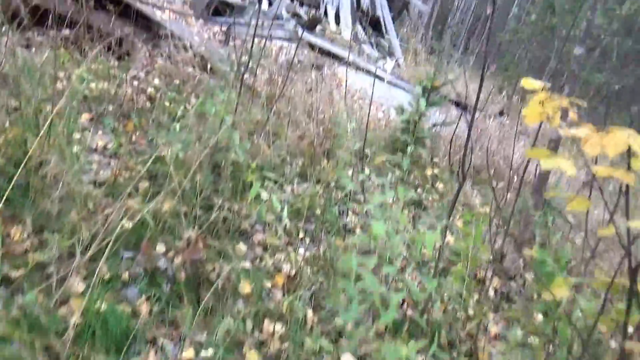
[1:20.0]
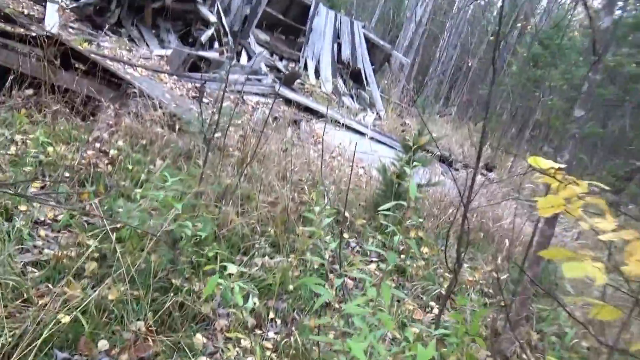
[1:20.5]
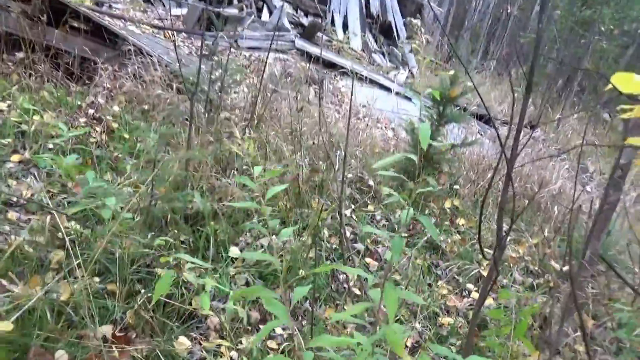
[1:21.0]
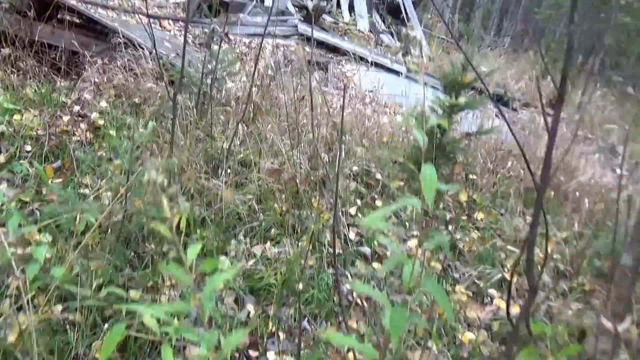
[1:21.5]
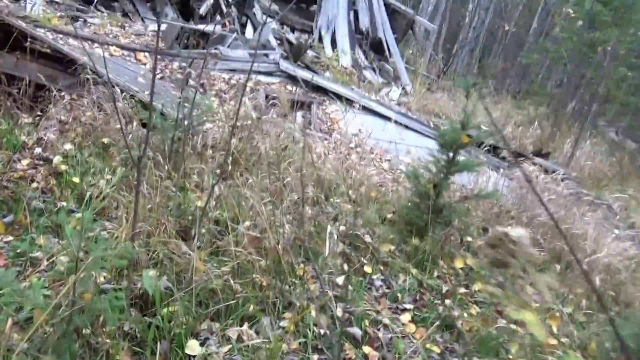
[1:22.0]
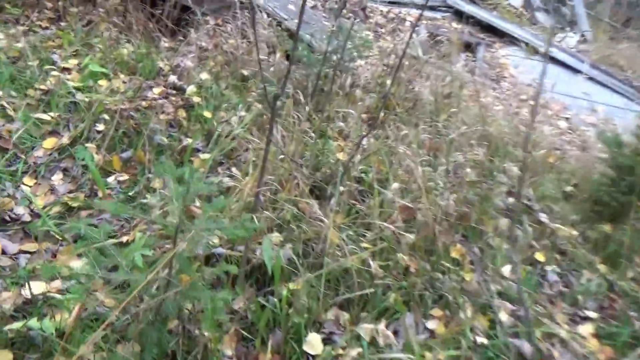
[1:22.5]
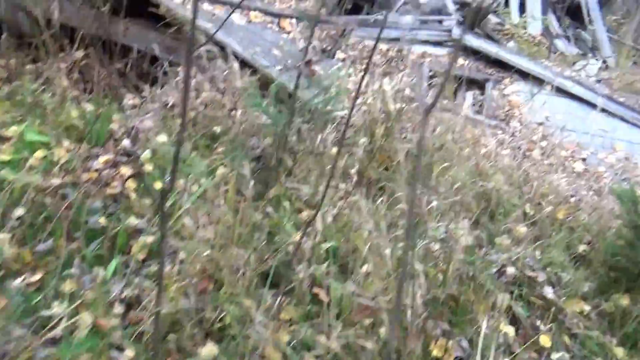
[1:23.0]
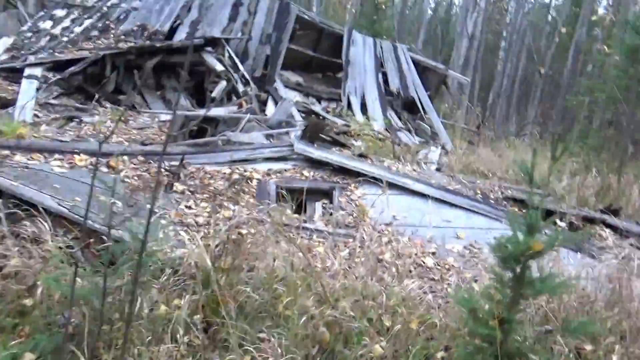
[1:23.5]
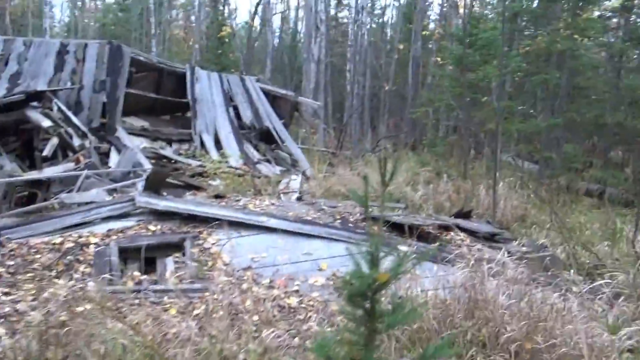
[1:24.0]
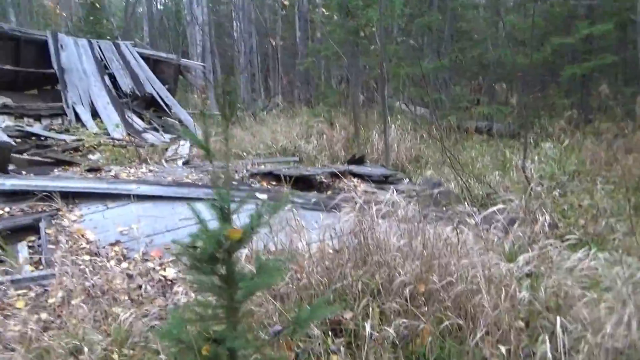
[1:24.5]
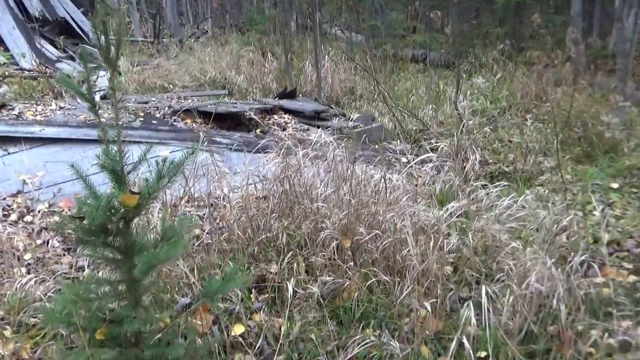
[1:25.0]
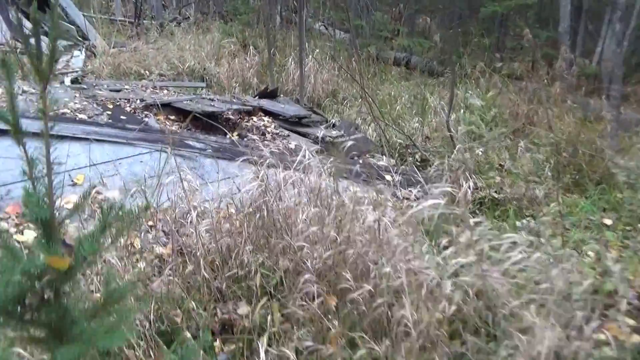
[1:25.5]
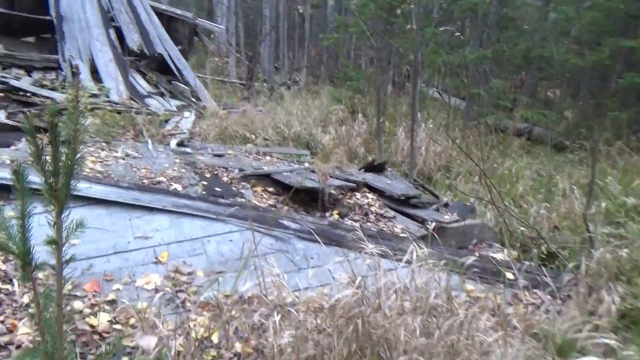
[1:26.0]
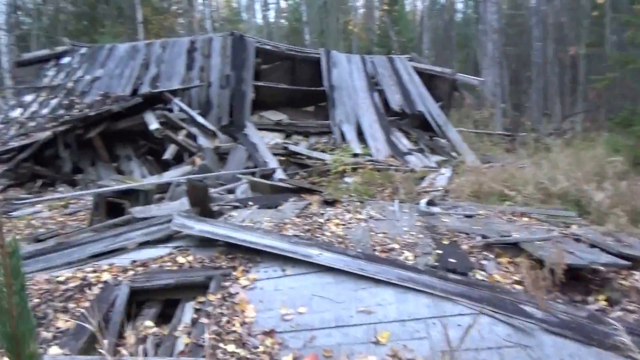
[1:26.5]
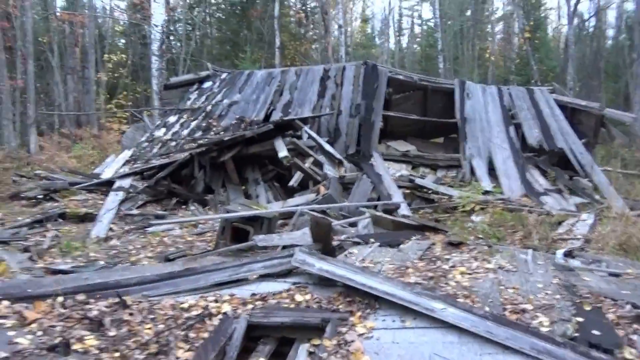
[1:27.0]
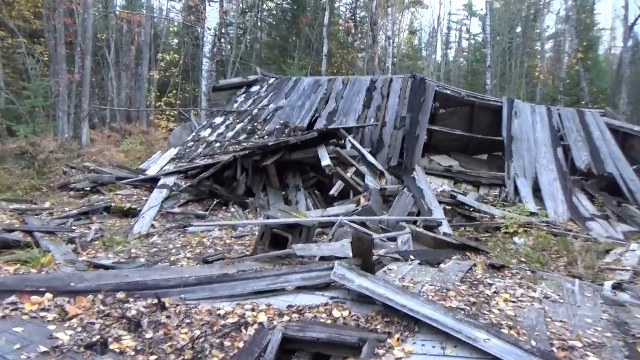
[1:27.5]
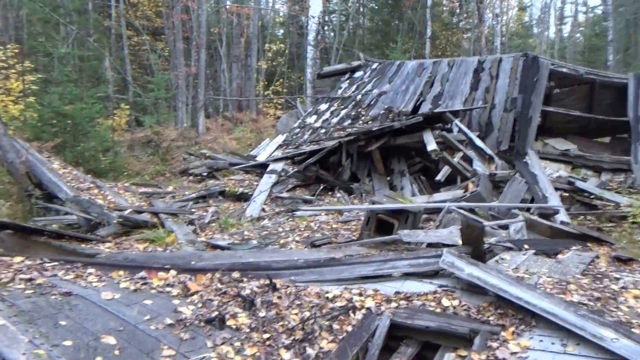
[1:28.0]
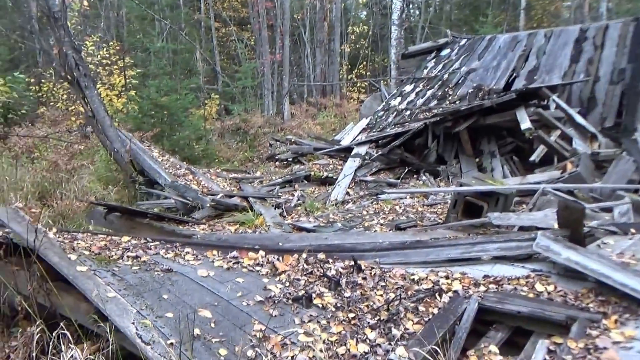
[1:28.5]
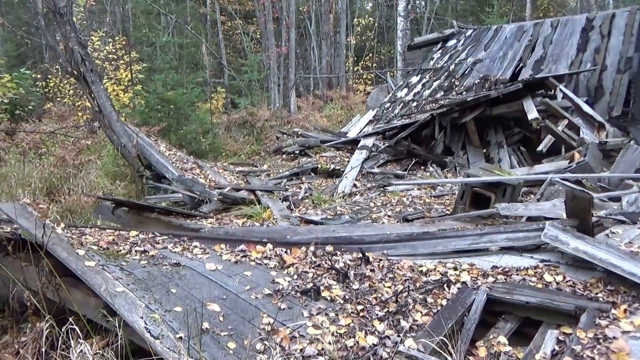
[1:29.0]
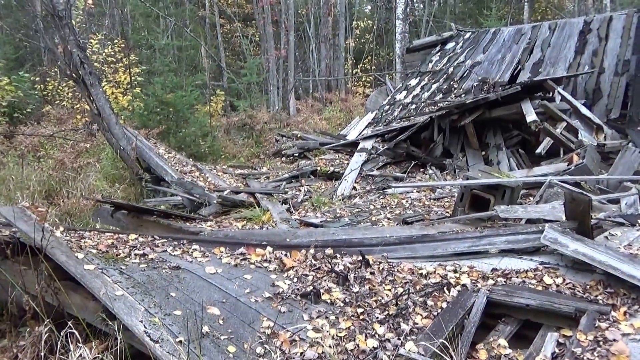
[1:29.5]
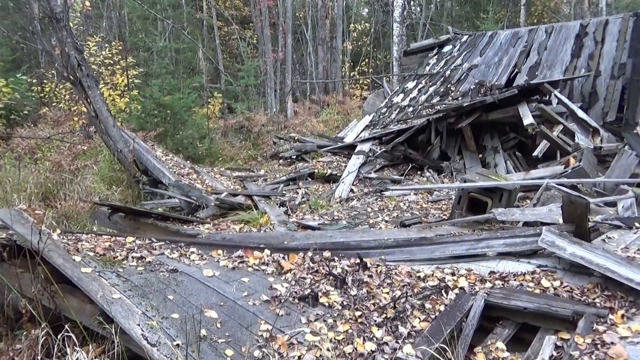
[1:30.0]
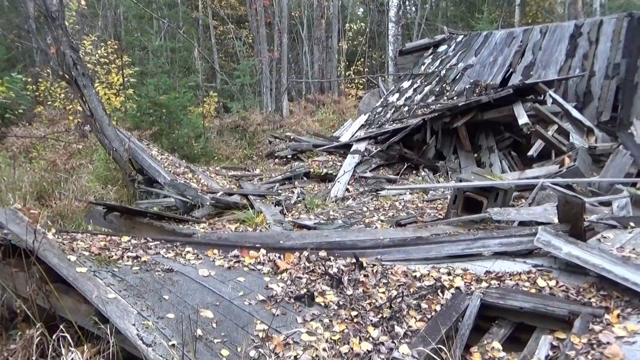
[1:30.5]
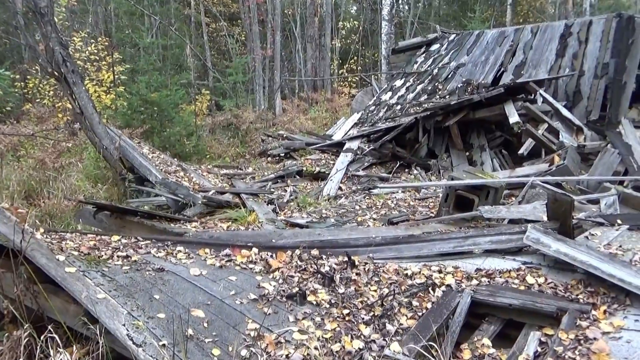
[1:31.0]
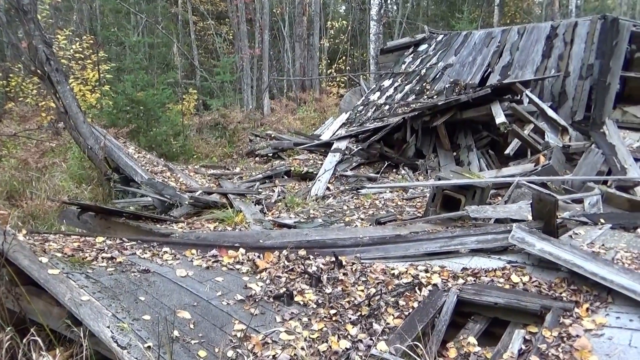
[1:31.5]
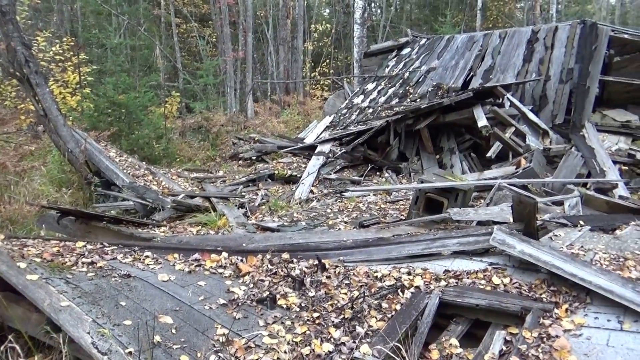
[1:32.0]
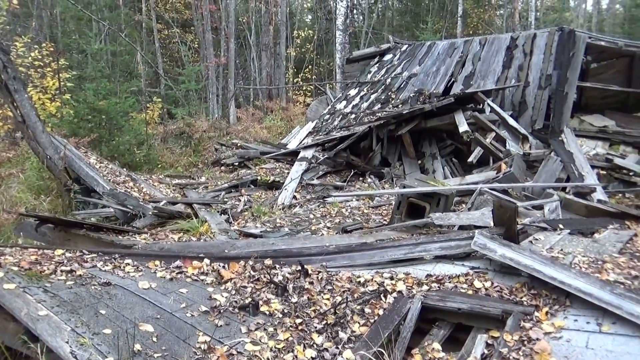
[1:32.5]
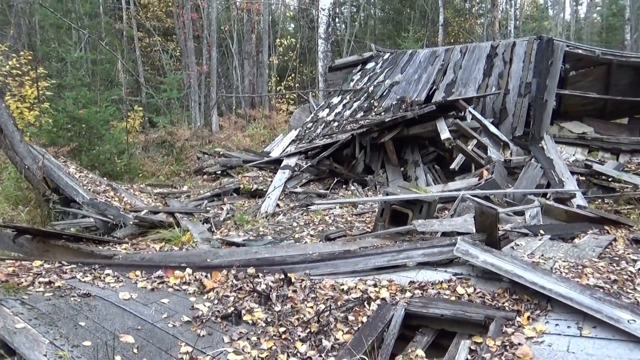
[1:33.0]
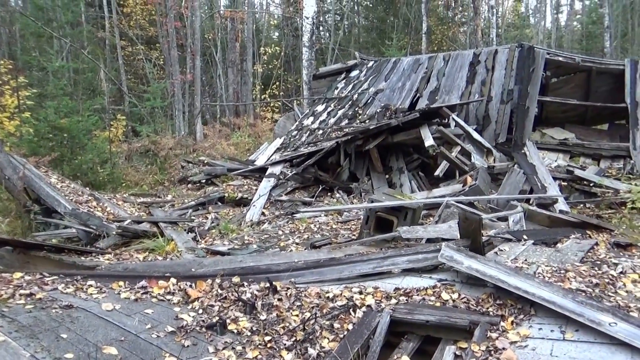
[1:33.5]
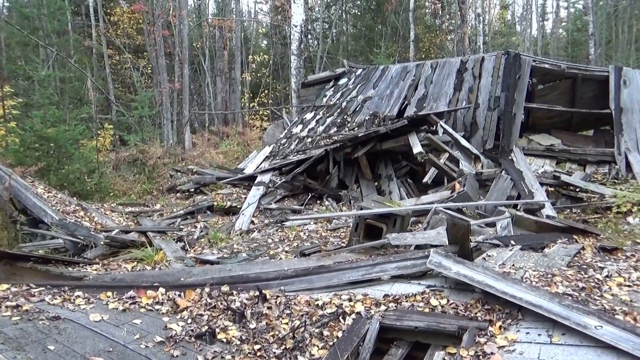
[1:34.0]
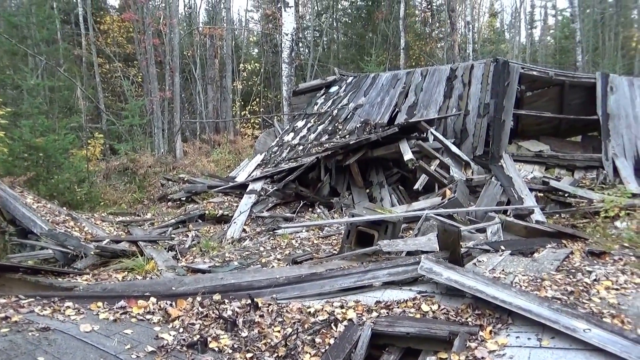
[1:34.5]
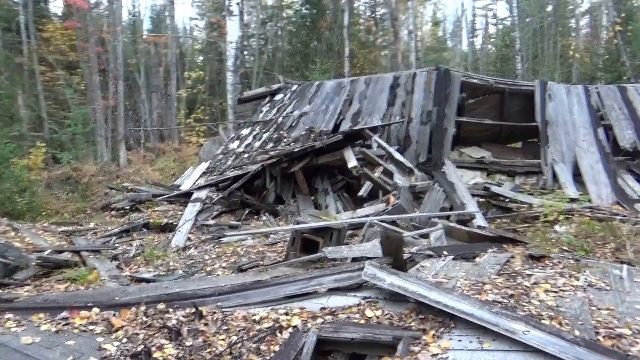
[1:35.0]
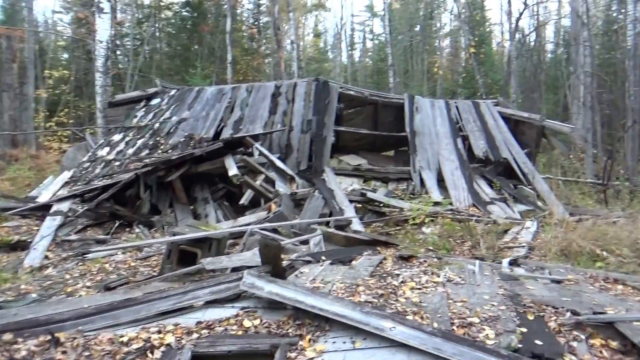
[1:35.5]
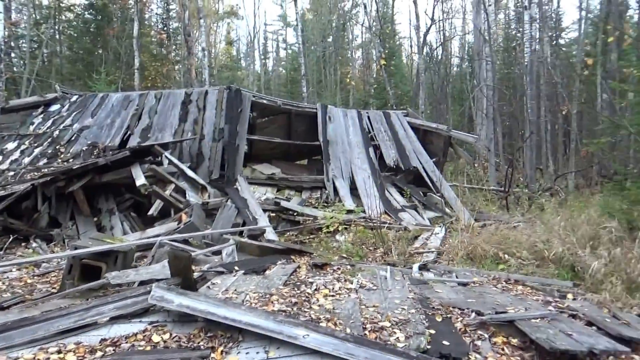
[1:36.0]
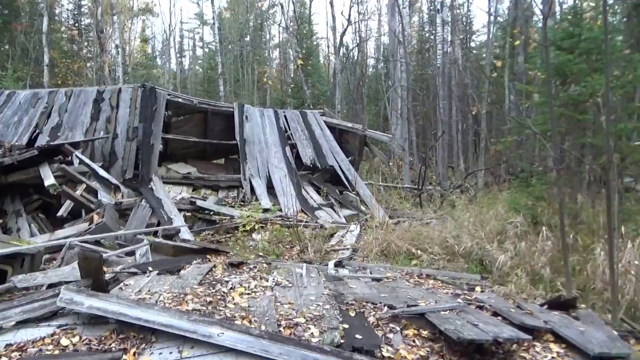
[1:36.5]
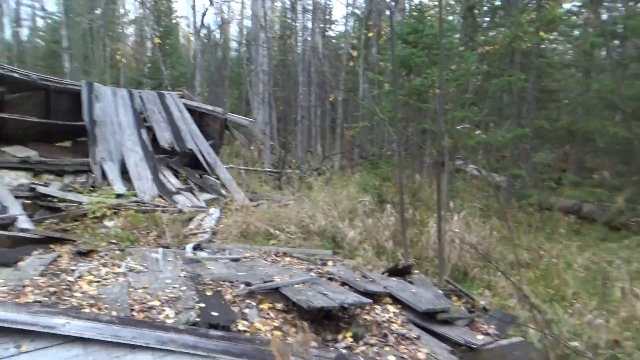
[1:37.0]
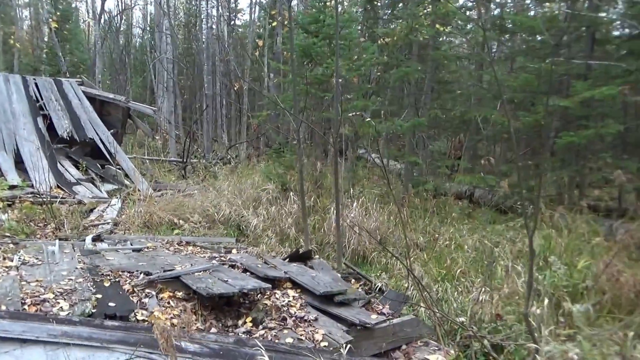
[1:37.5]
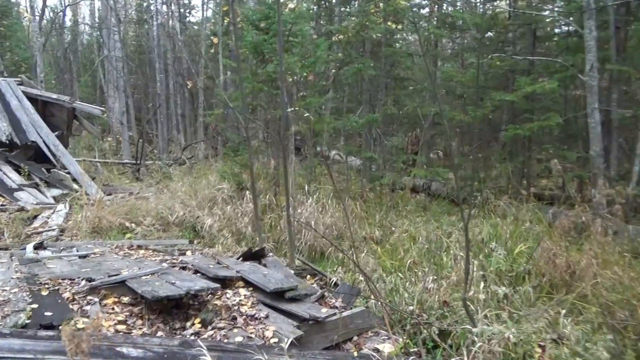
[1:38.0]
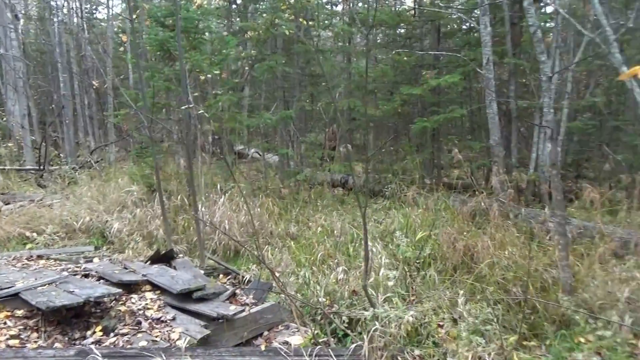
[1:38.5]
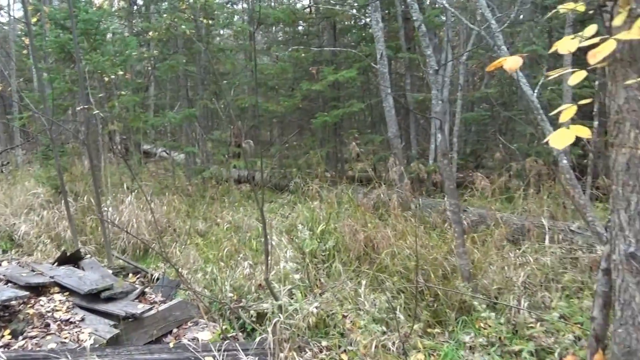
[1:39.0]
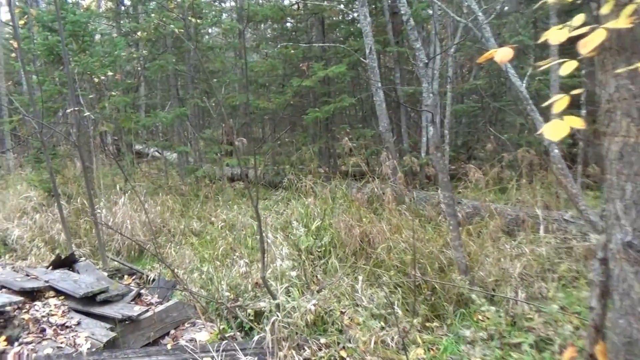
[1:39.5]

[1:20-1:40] The person walks through the forested area on grass with lots of leaves around. The camera focuses on the ground and moves up and around to the right-hand side as he walks closer and closer to the structure, which is now clearly a roof of some sort. On the left-hand side, the camera focuses on the debris on the ground: leaves and lots of wooden beams strewn and scattered around. The left-hand side of the roof is broken at the base. On the right-hand side an entire section is missing, and there are some broken beams there as well. The camera continues panning right into the grass clearing, with more trees in the background.